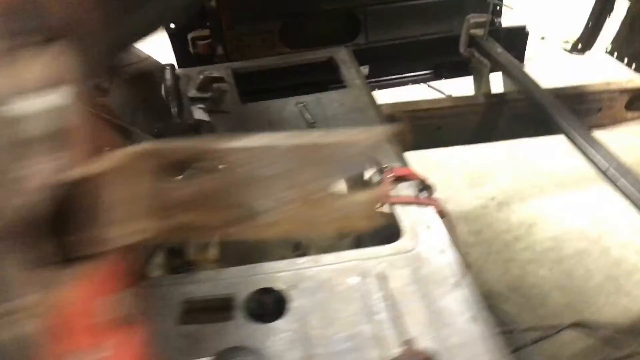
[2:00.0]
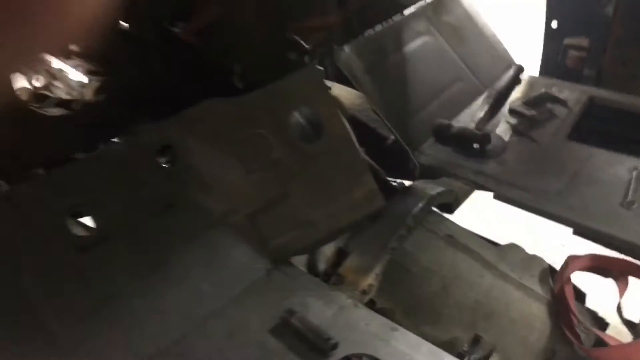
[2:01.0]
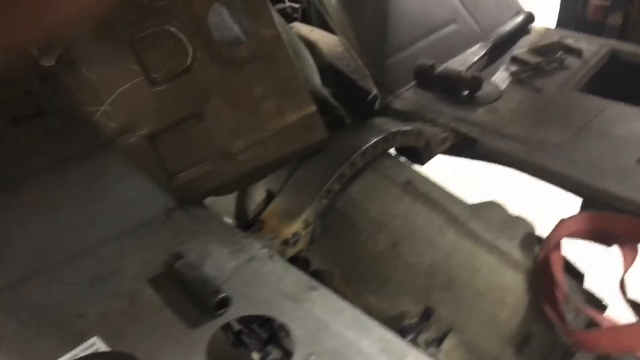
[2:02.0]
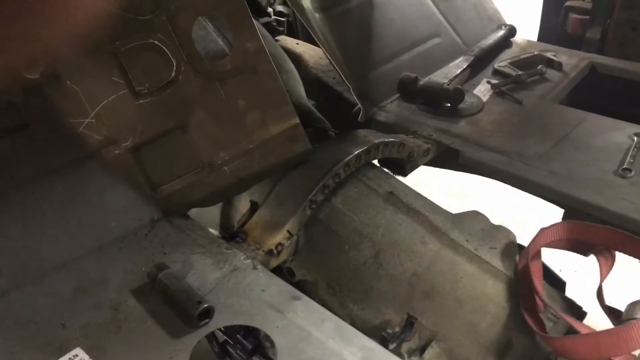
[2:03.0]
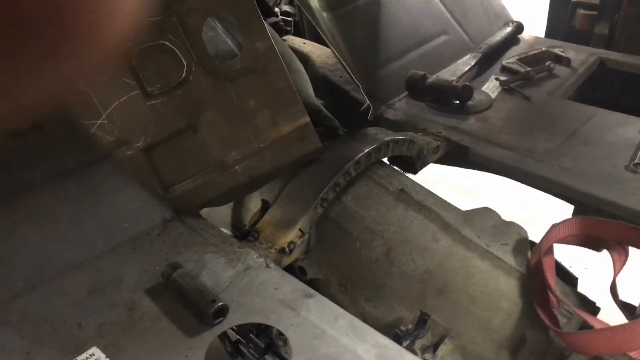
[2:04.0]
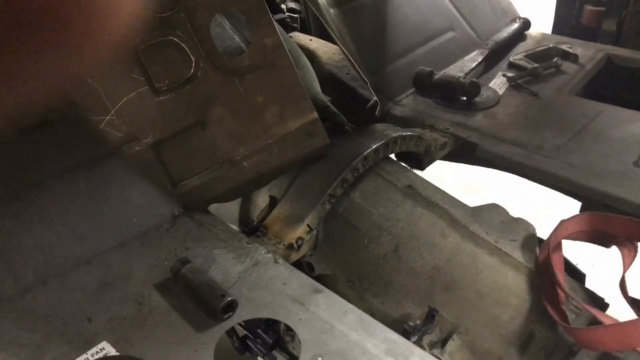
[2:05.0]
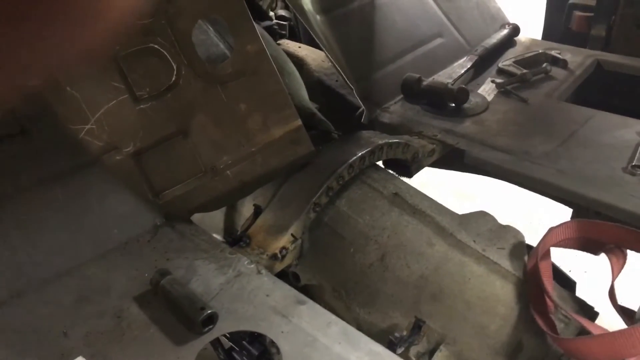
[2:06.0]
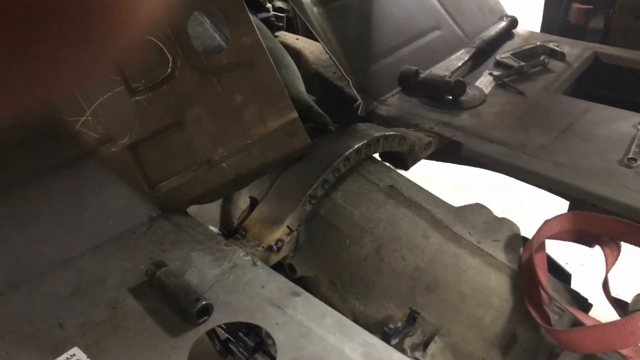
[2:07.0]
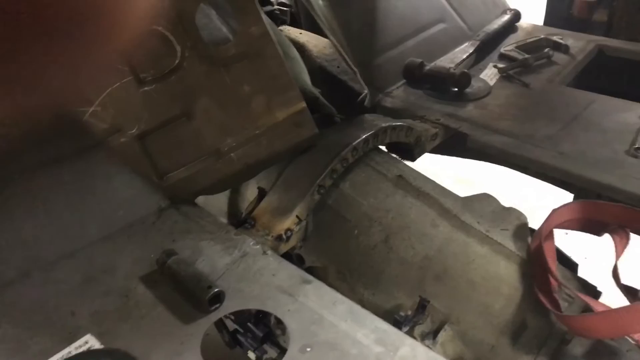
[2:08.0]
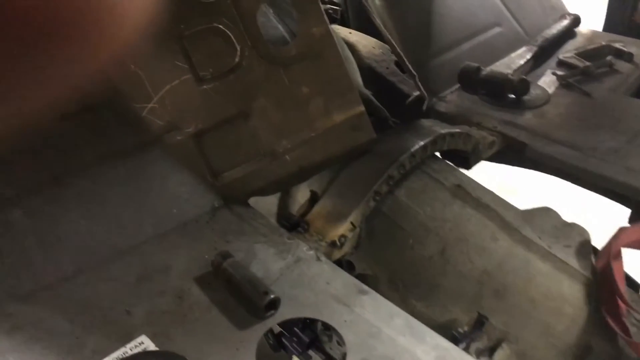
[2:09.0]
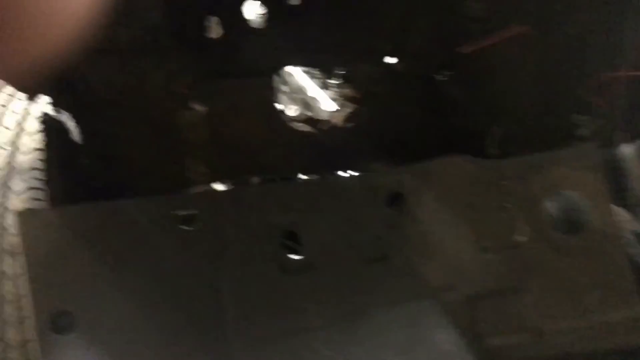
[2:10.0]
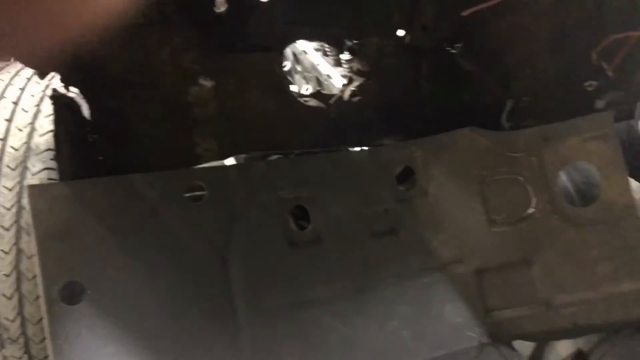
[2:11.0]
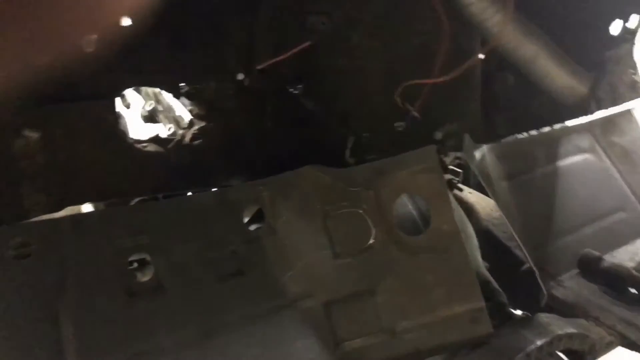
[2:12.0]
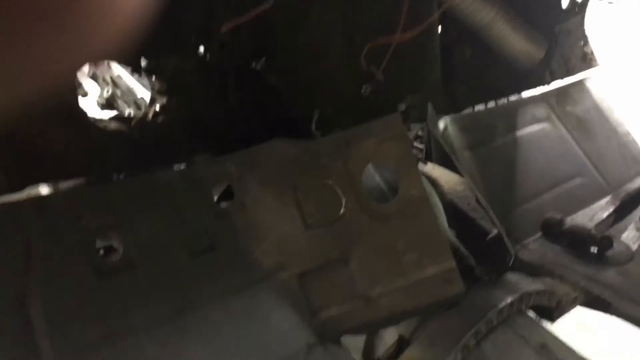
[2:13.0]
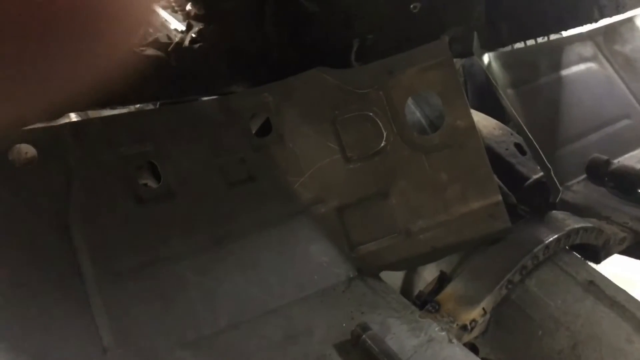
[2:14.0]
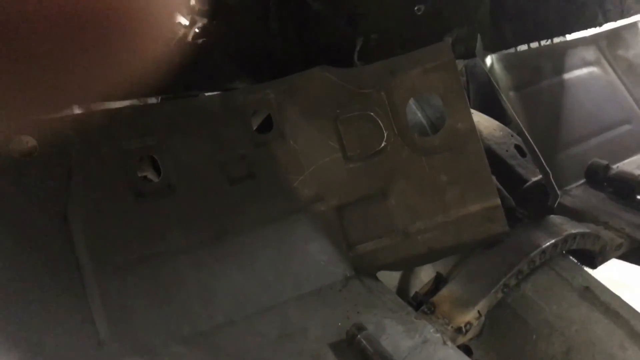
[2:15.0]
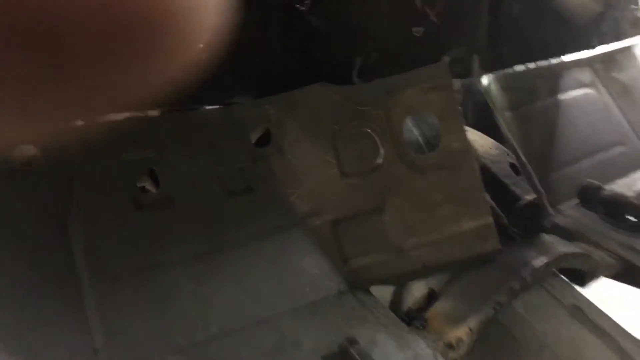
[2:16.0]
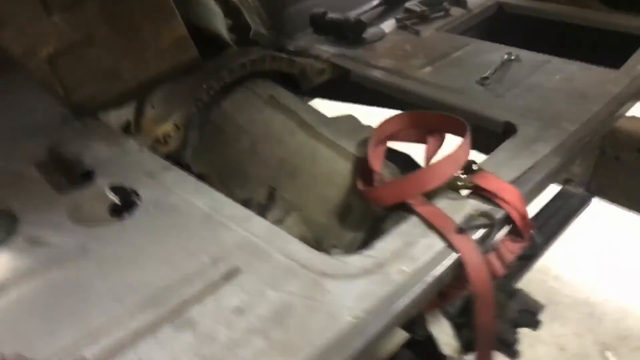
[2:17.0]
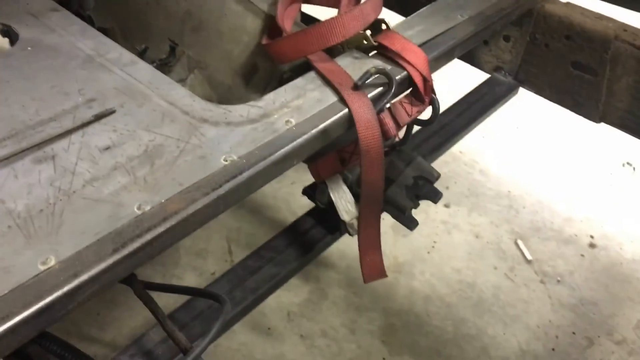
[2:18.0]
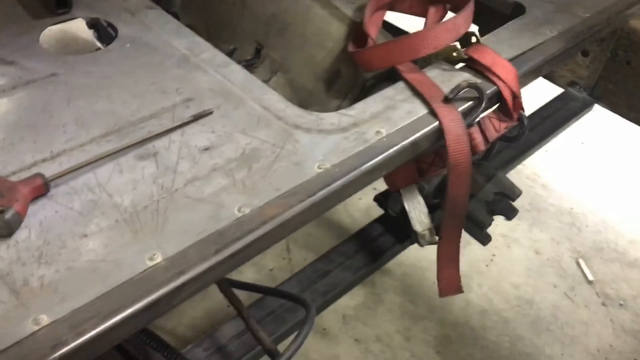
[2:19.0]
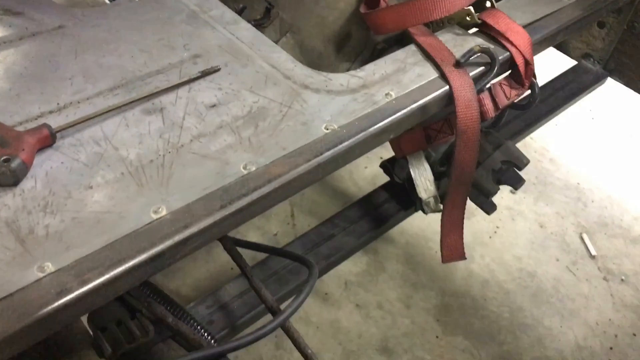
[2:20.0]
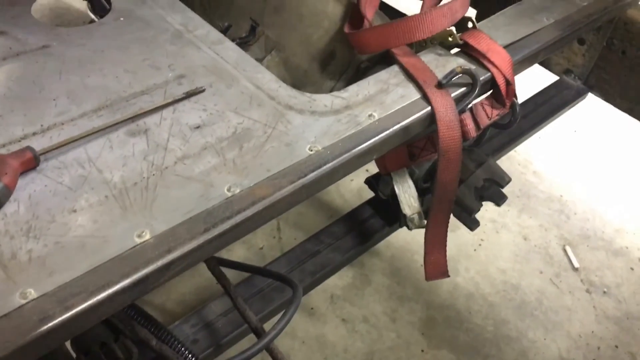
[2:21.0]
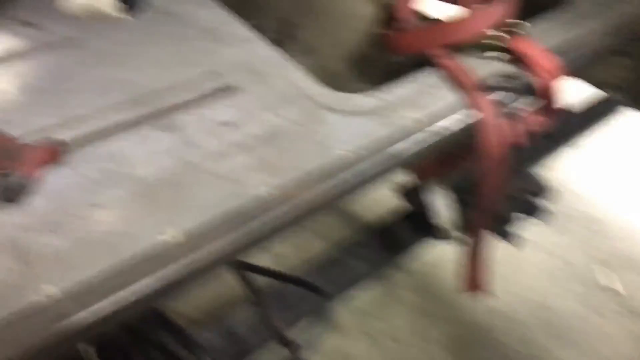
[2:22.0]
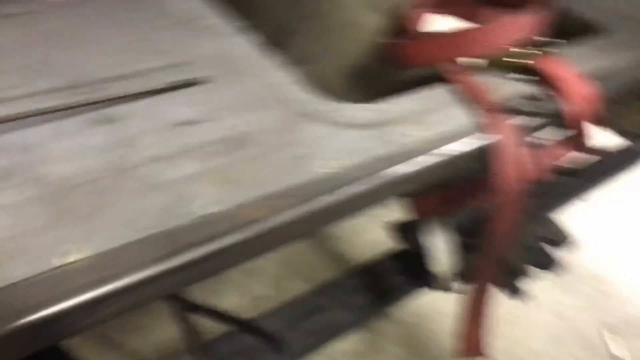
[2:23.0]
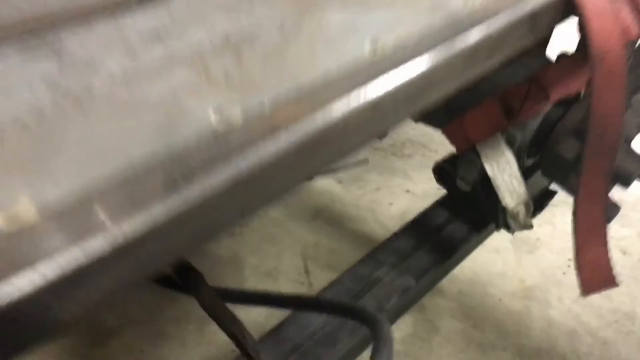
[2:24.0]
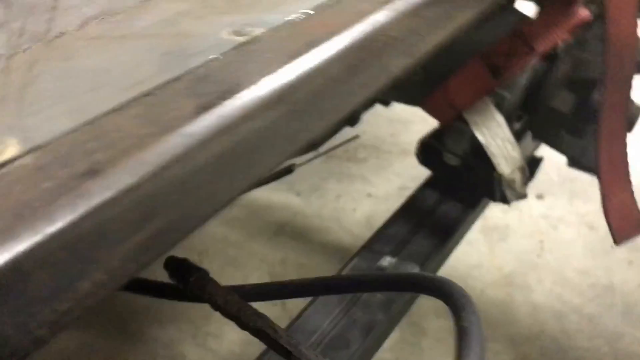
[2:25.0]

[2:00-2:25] The view starts in the seat area of the vehicle, or what used to be the seat area, looking sort of up close at floor panels with several tools laid out, apparently including a mallet. Part of the man's hand is visible in the top left corner. The view then shows where a steering wheel would have been, and the camera moves down to another tool. The camera zooms in on some kind of red strap wrapped around part of the floorboard undercarriage area. The piece in view looks sort of similar to the piece that was lying upside down on top of the tire earlier; it is unclear whether it is the same piece. A vice grip and a mallet are visible, along with red wires hanging down and rusted-out, corroded areas. There is apparently a cigarette on the floor, and there is another red-handled tool.